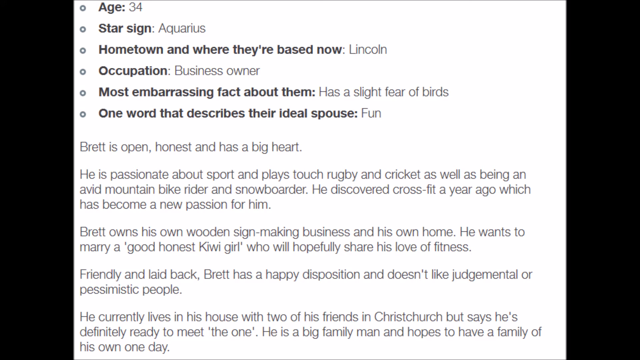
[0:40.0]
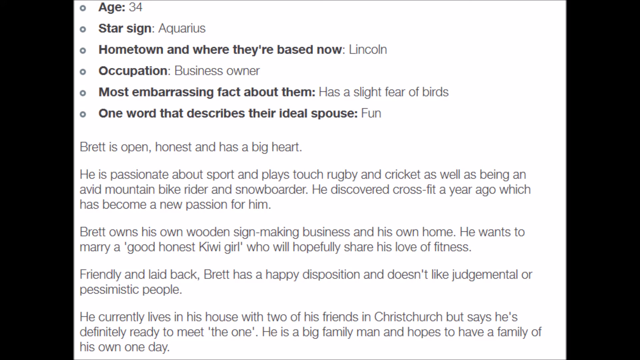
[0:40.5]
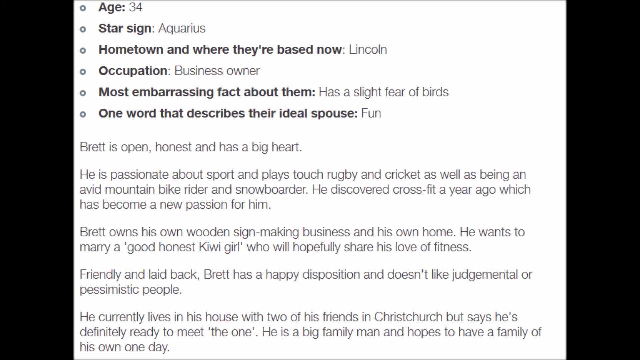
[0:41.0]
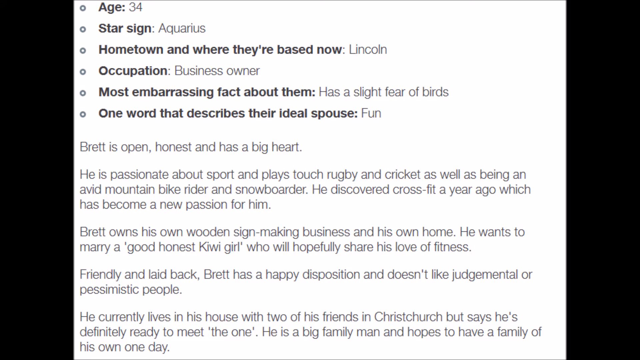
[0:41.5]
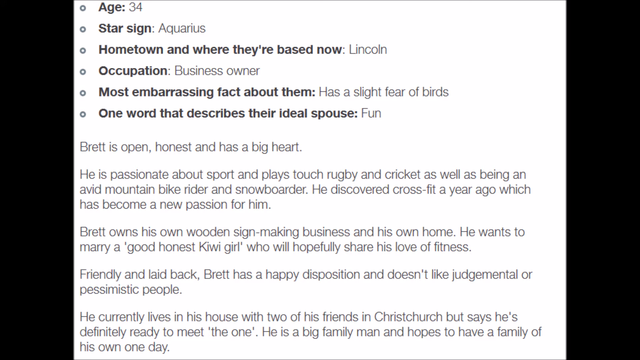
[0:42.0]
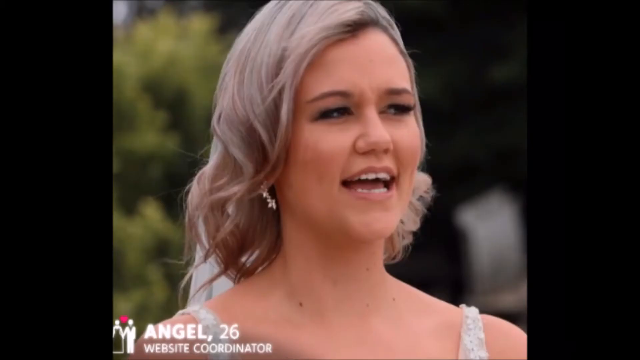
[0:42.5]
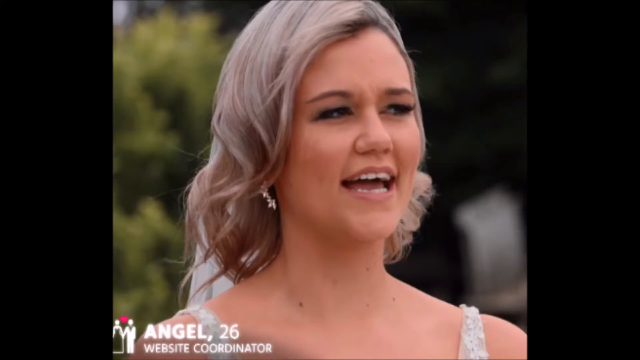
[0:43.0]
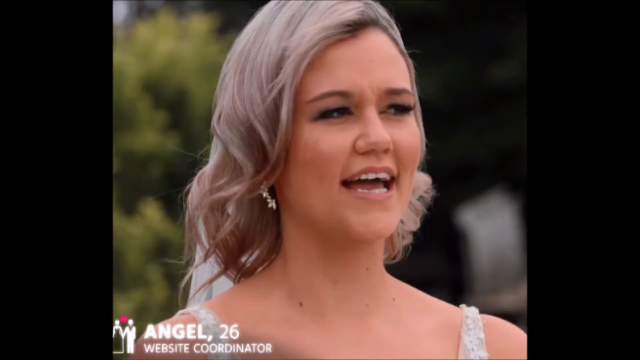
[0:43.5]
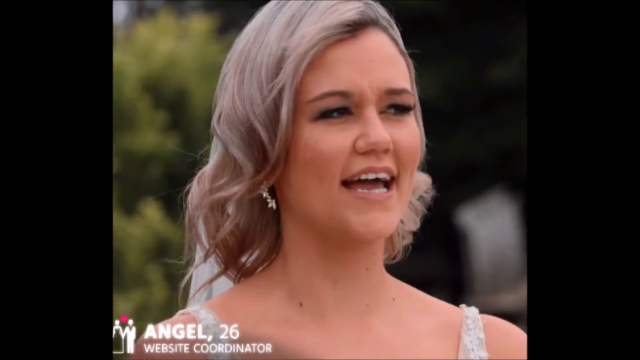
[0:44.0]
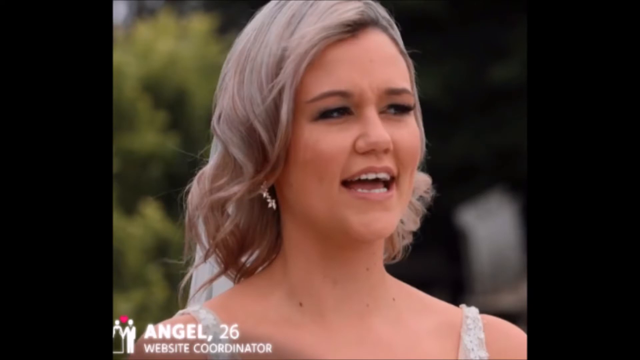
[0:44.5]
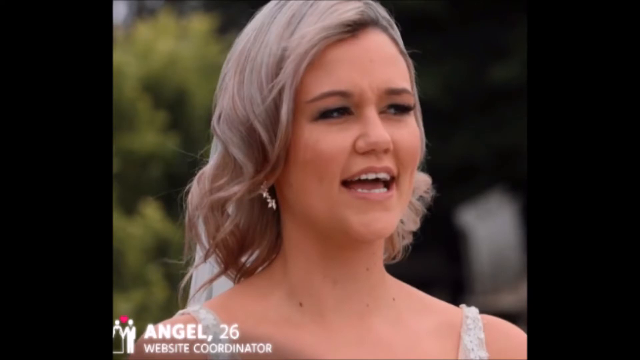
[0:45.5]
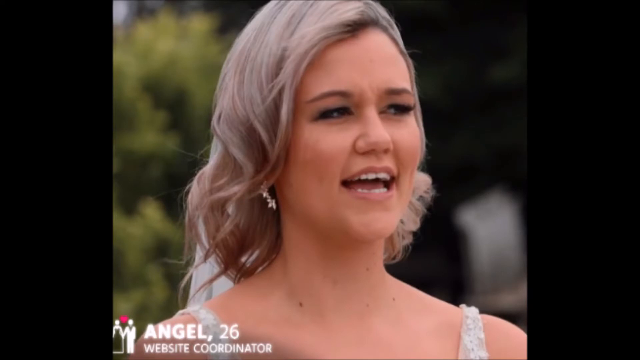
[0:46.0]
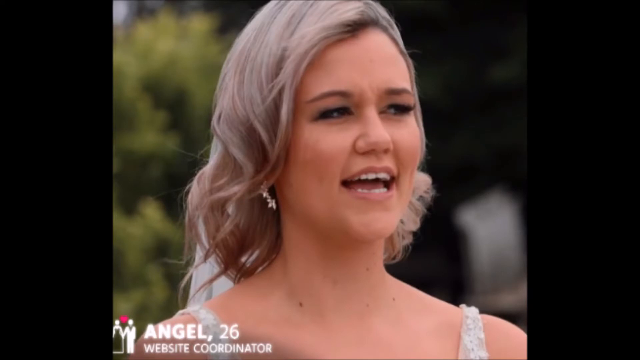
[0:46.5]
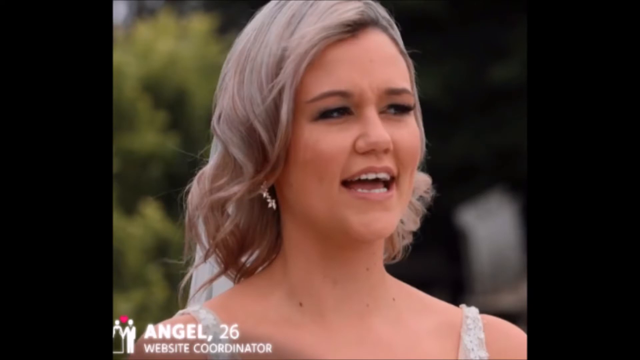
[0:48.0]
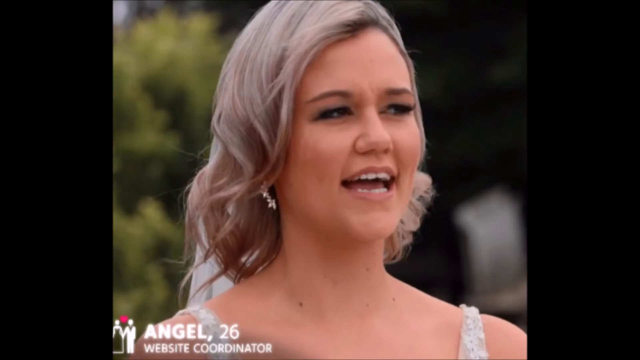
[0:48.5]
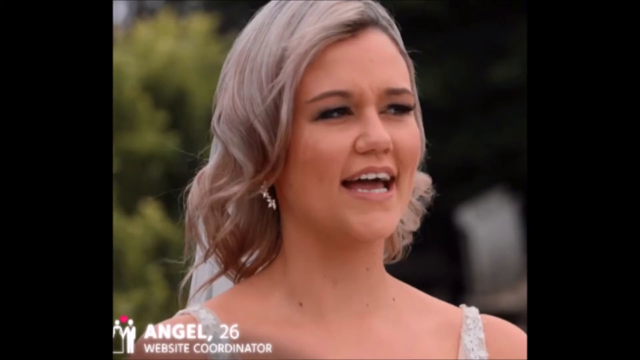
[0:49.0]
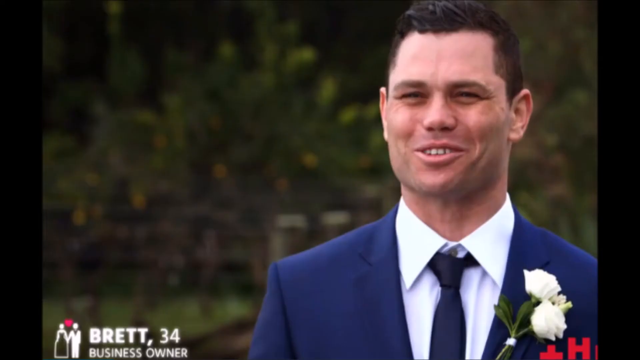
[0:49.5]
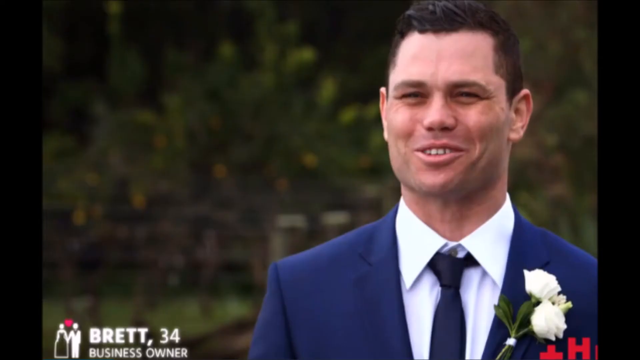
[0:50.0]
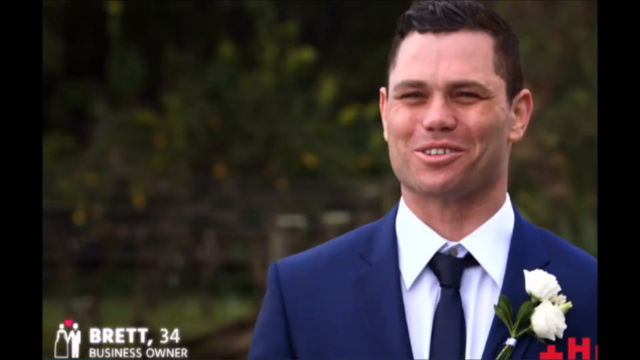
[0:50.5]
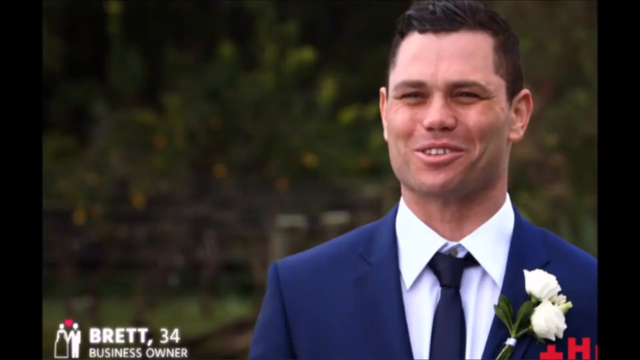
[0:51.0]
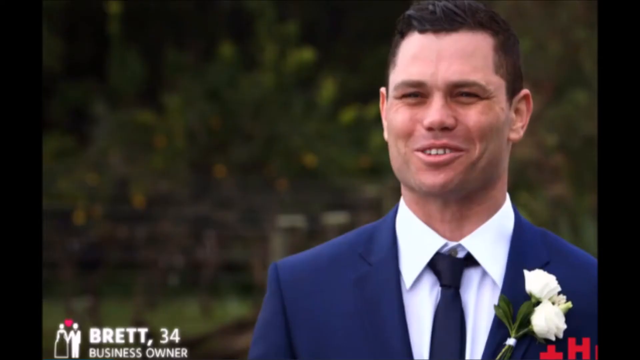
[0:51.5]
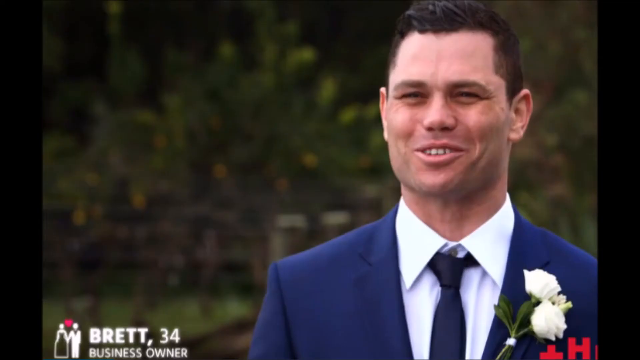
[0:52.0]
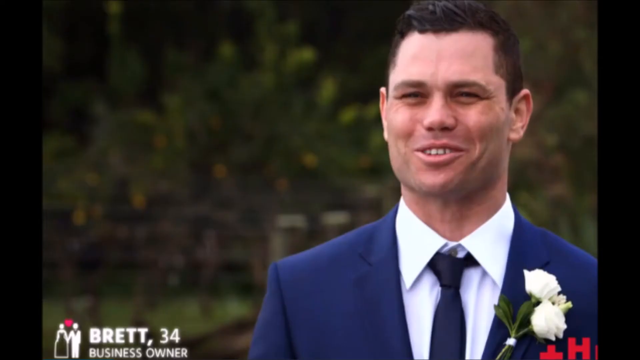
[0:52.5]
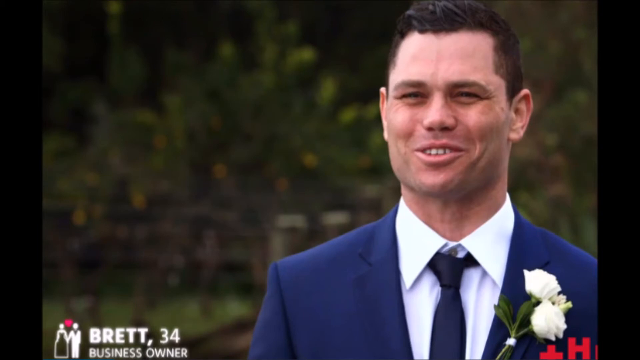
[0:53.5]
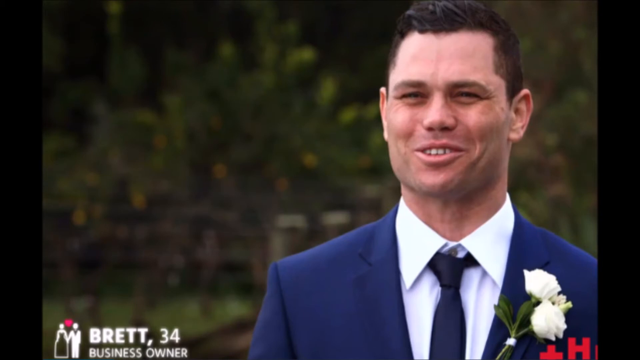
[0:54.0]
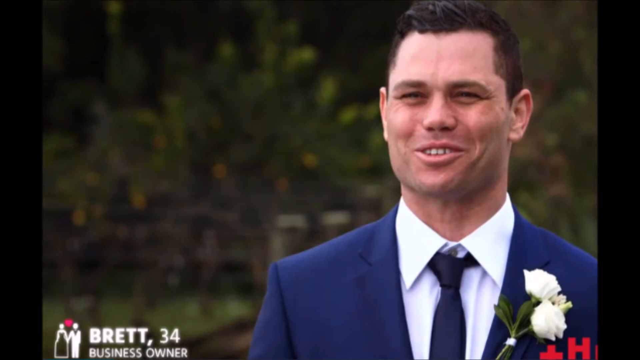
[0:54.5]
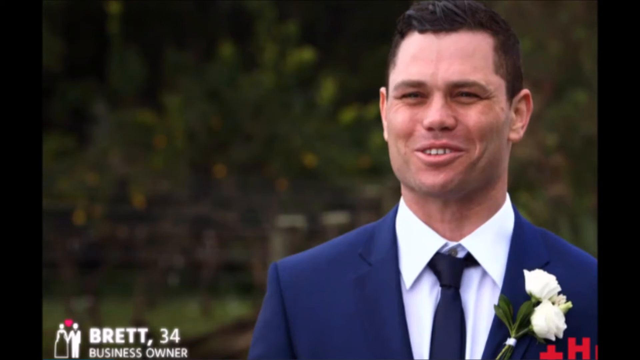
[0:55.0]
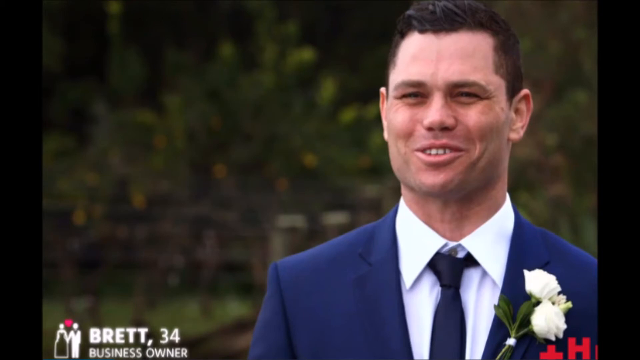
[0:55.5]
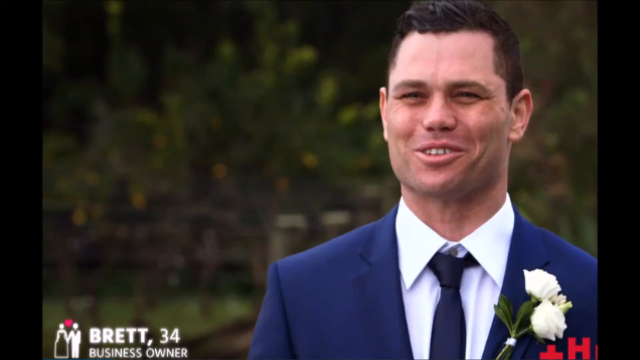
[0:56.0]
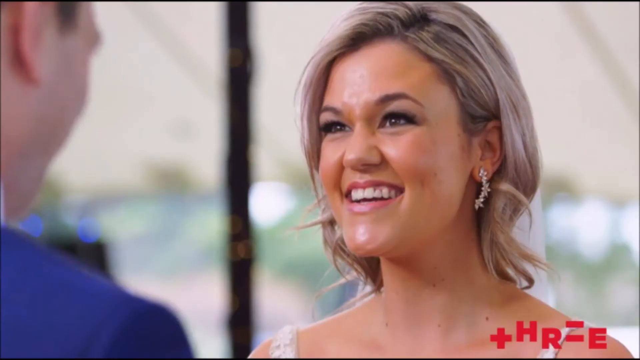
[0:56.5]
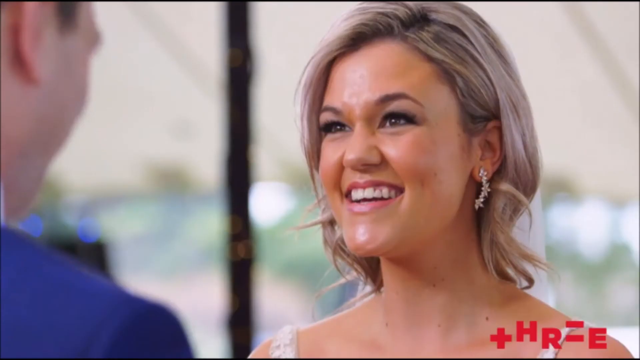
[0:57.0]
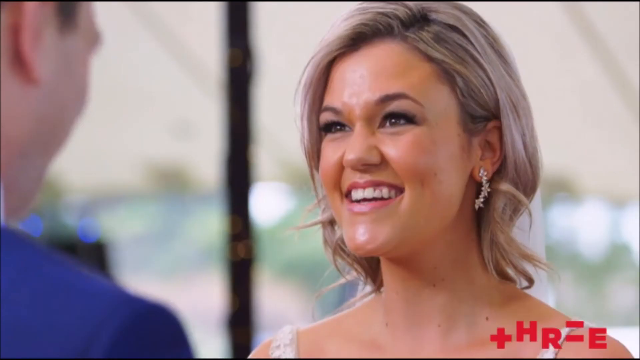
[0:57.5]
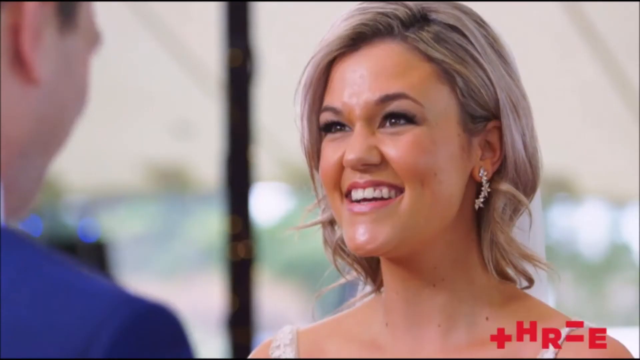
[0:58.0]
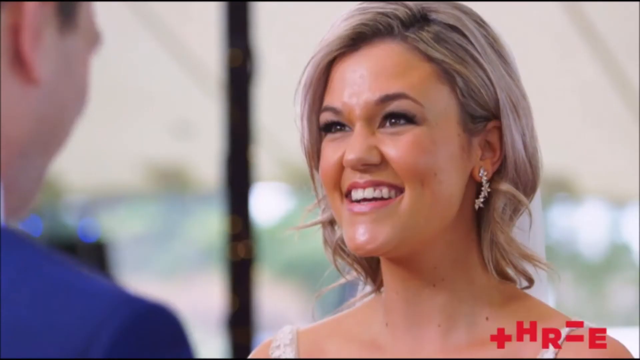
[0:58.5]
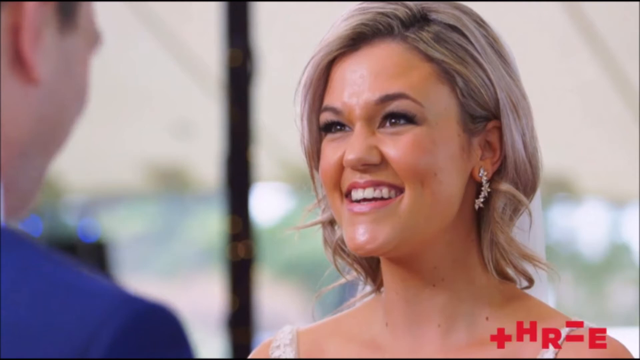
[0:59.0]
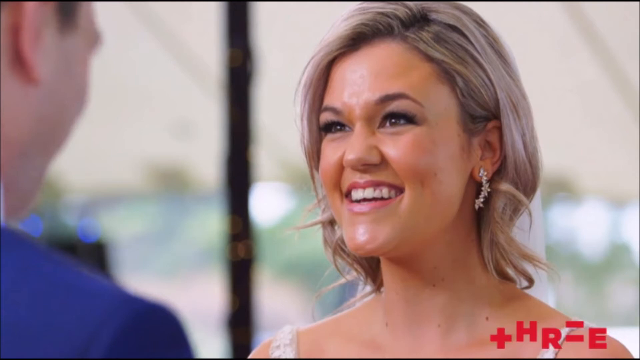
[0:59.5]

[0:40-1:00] Text describing a man reads "age 34", star sign "Aquarius", hometown and where they are based now "Lincoln", occupation "business owner", most embarrassing fact "has a slight fear of birds", and the one word describing the ideal spouse, "fun". The description continues: "Brett is open, honest and has a big heart. He's passionate about sports", plays cricket and is "an avid mountain bike rider and snowboarder". It says he discovered CrossFit a year ago, which has become a new passion for him, and reads "Brett owns his own wooden sign making business and his own home." Further text says he wants to marry a girl who will hopefully share his love for fitness, begins "Friendly and laid back, Brett", and says he "doesn't like judgmental or pessimistic people". A picture then shows Angel, 26, in a white dress, and Brett, 34, in a blue suit with a flower pinned to it. The two look at each other, and the woman has piercings in her left ear.